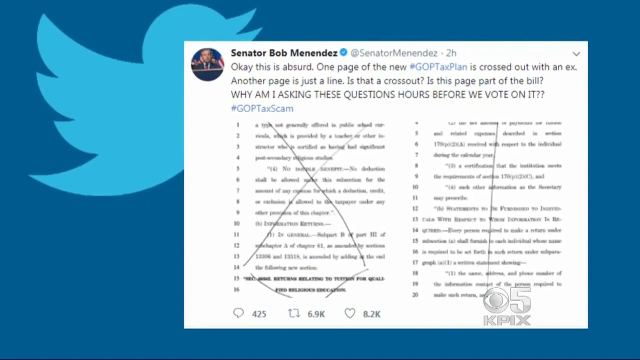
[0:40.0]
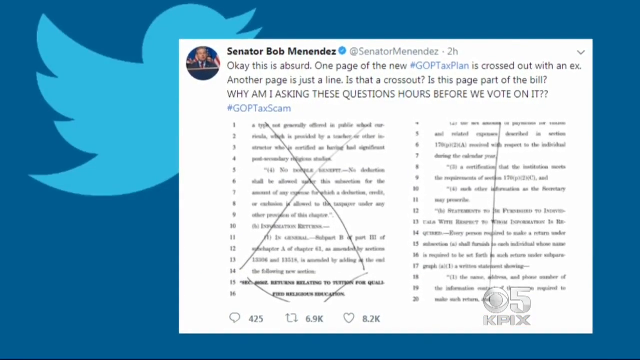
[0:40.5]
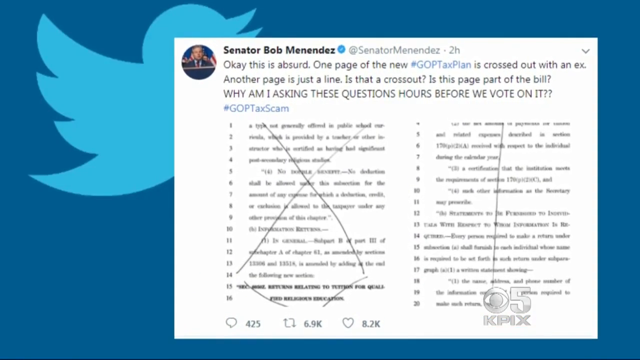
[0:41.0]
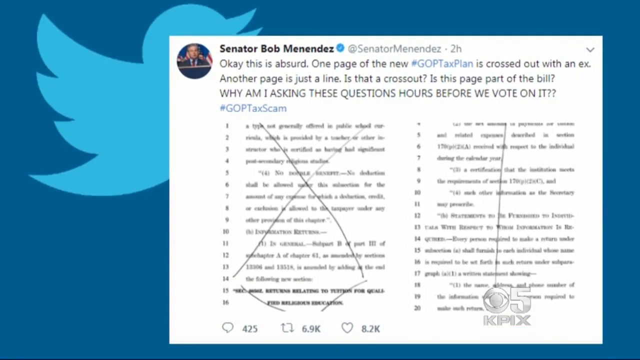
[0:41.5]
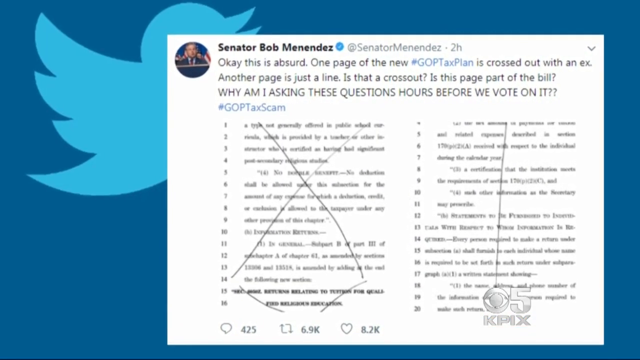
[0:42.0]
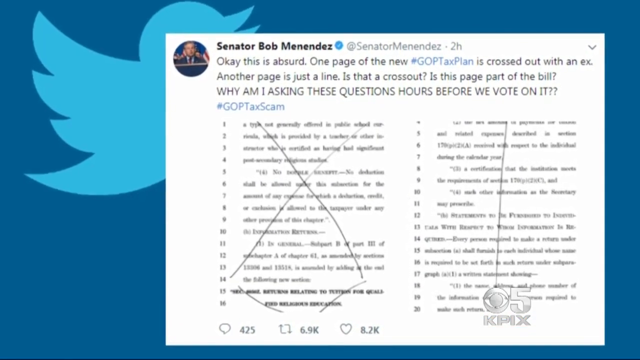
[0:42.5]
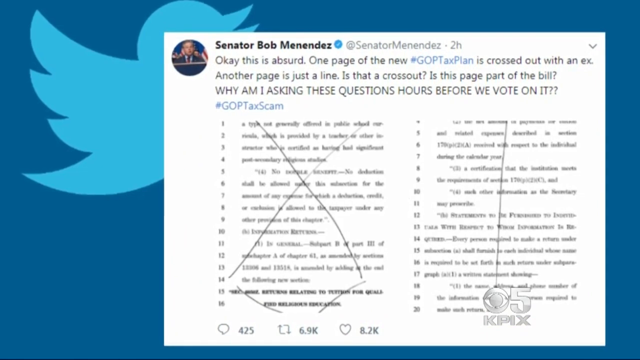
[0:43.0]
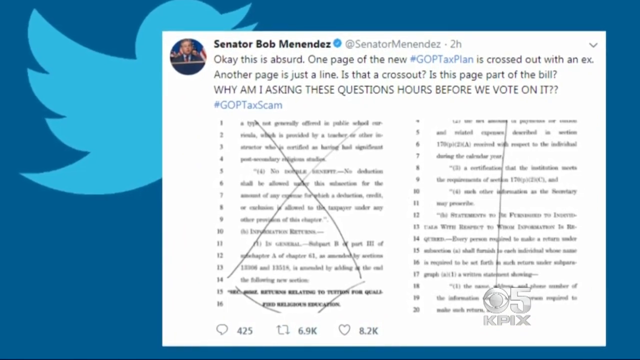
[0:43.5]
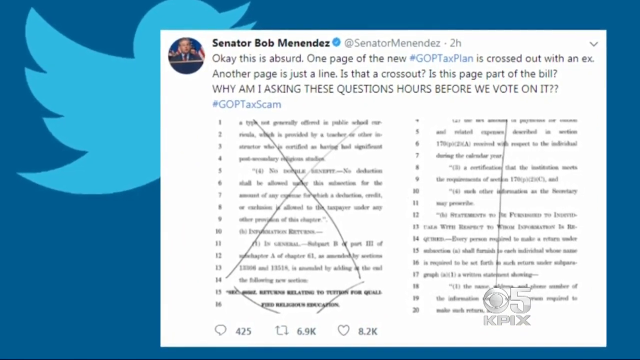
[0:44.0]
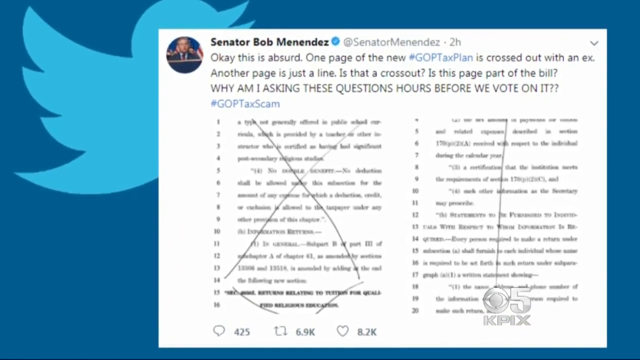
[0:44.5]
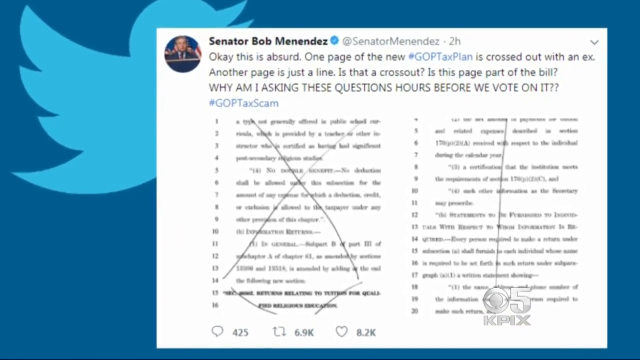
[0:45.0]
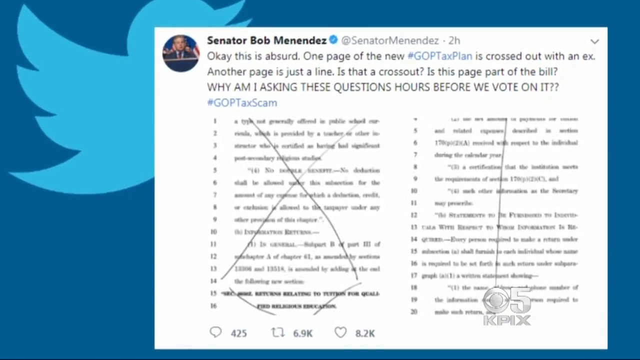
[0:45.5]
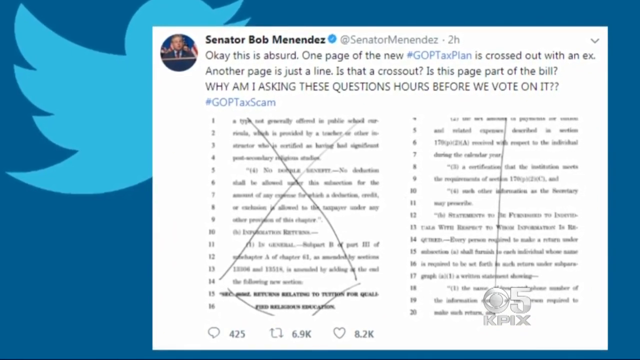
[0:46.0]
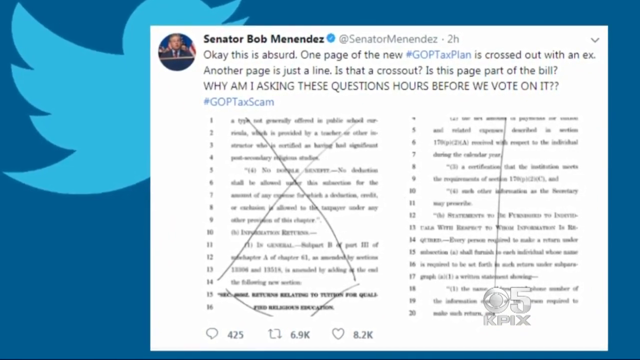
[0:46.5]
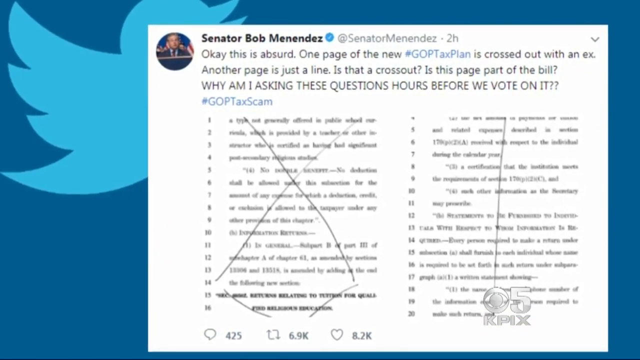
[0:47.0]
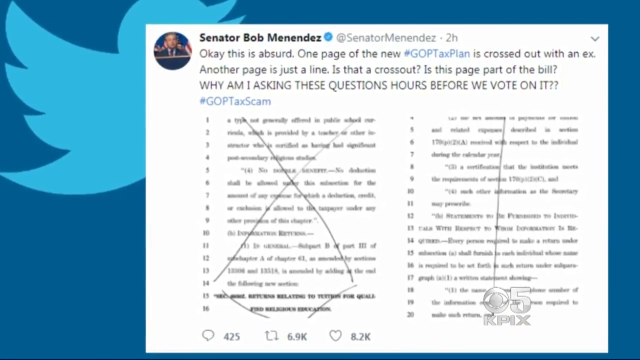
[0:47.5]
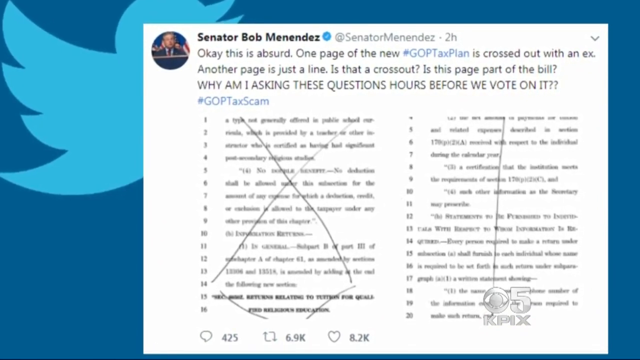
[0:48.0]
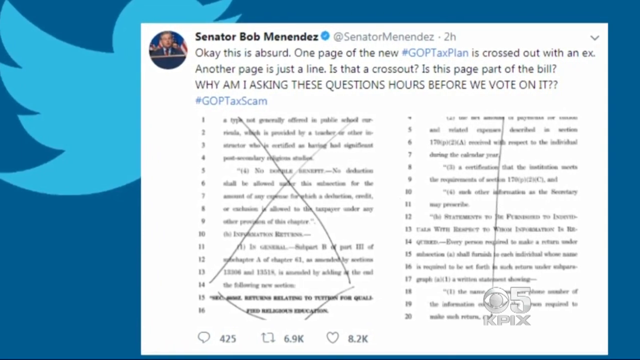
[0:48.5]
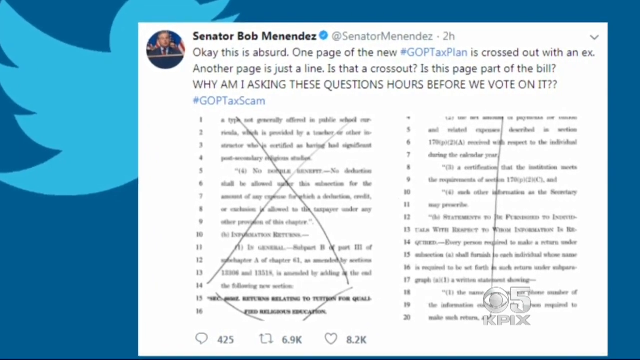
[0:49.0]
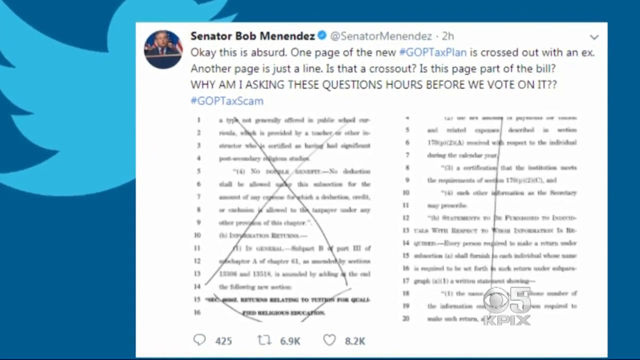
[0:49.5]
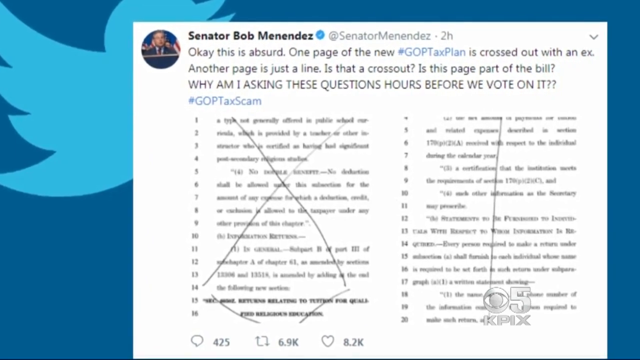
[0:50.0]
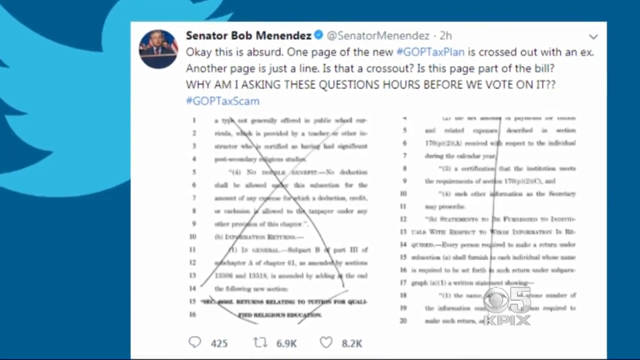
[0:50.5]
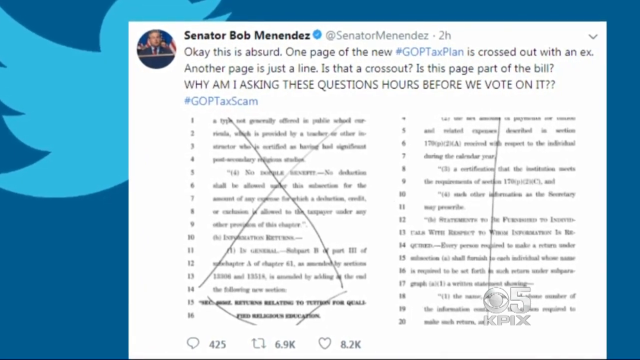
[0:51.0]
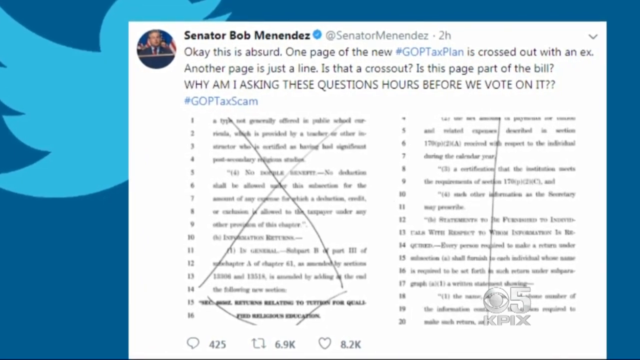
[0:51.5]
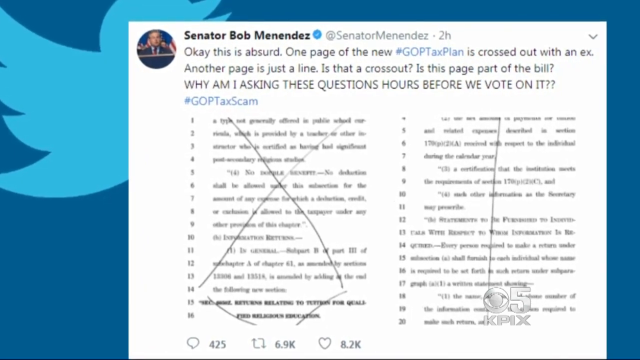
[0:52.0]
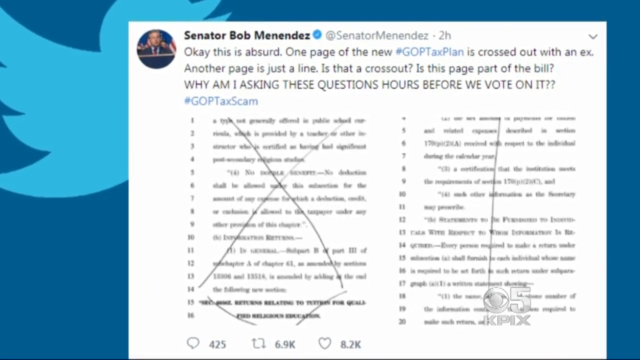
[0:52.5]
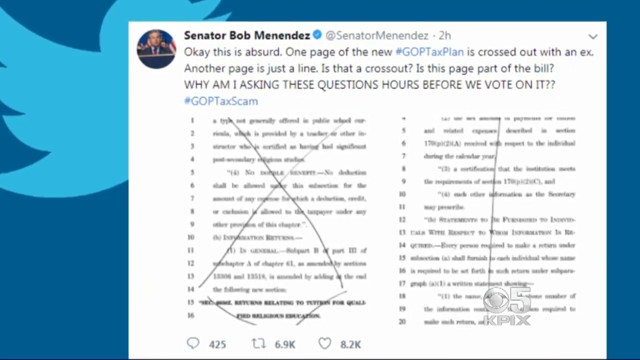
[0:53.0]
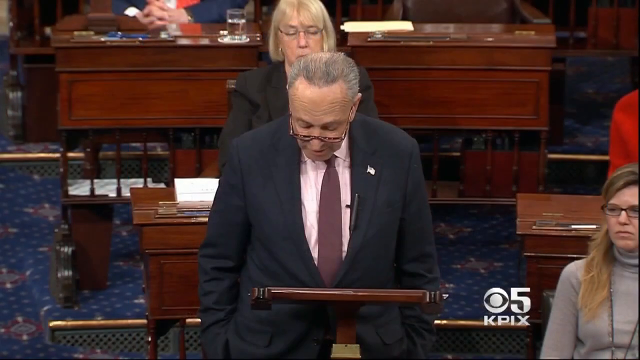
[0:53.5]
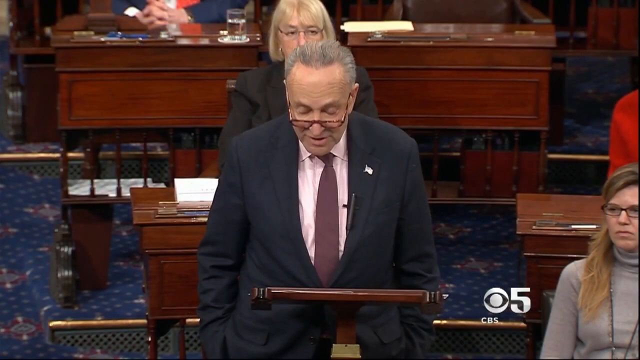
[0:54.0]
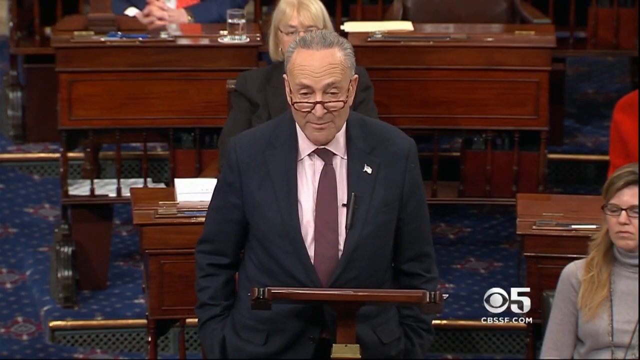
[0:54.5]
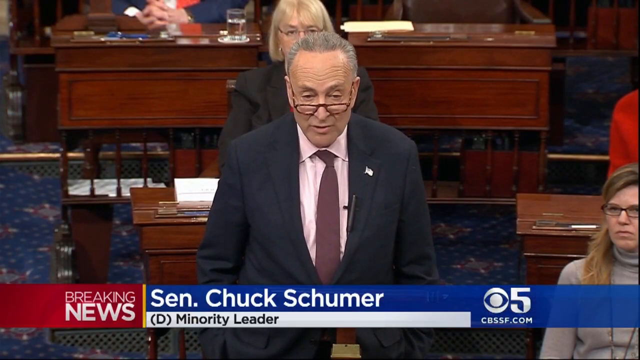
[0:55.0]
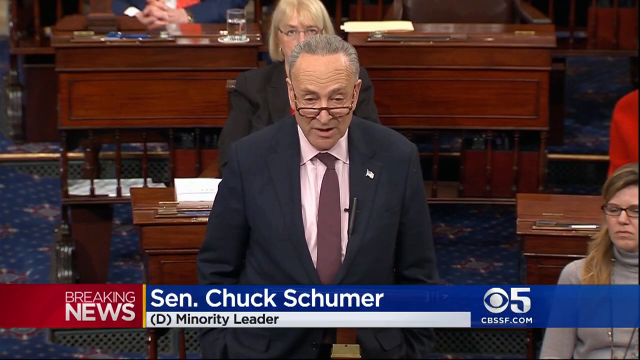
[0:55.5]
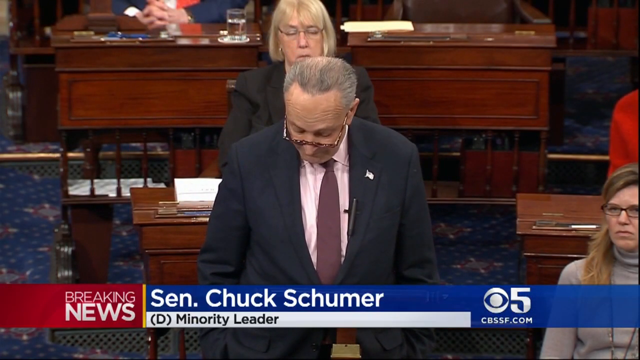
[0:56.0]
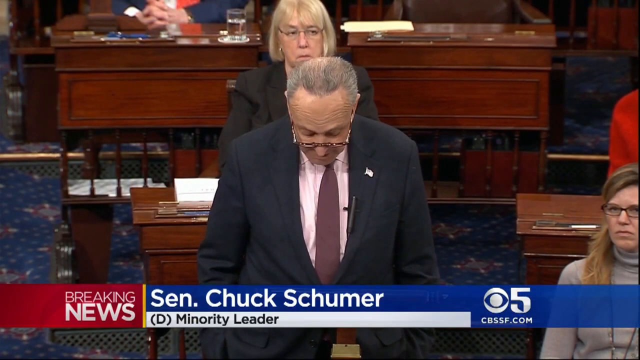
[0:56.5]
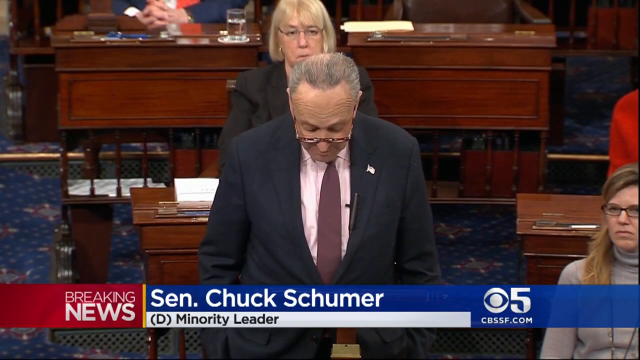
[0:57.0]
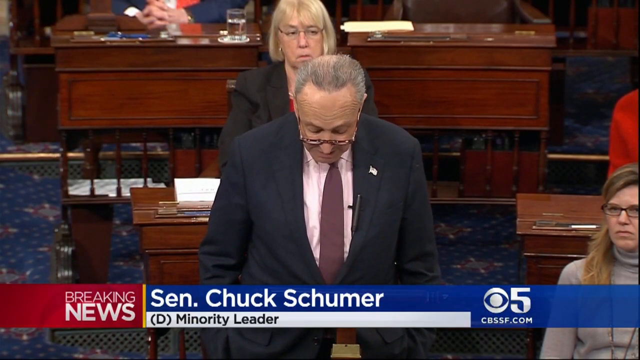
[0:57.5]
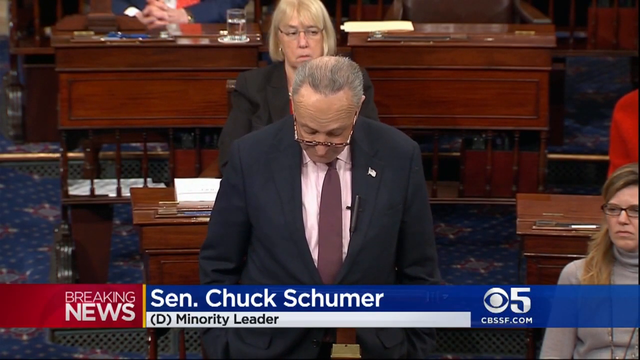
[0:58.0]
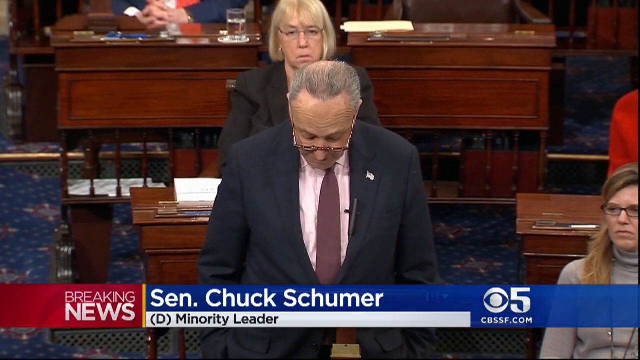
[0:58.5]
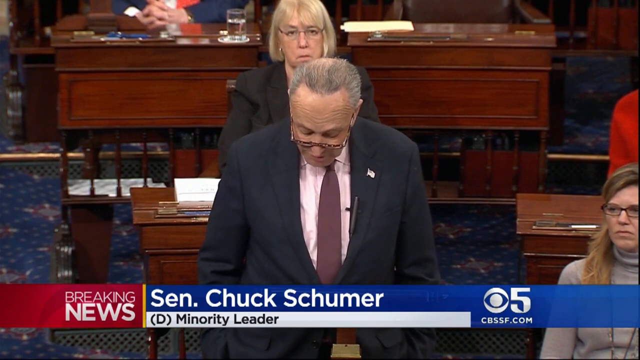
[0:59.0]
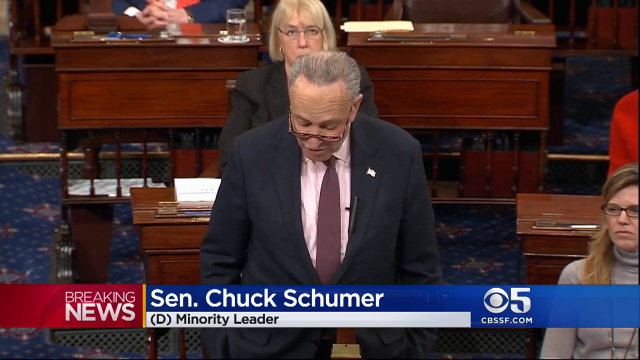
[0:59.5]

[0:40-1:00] The Twitter bird, with its mouth open, is in the upper left corner, and the tweet from Senator Bob Menendez is shown, marked as posted two hours earlier. It reads: "okay this is absurd one page of the new GOP tax plan is crossed out with an X another page is just a line. Is that a crossout? Is this page part of the bill? Why am I asking these questions hours before we vote on it" with the hashtag "#GOPtaxscam". The view then zooms in on the X and a line going through the paperwork. Next, apparently Chuck Schumer appears, with a name label that includes an abbreviation for senator, "(D)" underneath in parentheses, and "minority leader" next to it. He is standing and keeps looking down. He wears dark-colored lenses, either red or brown.